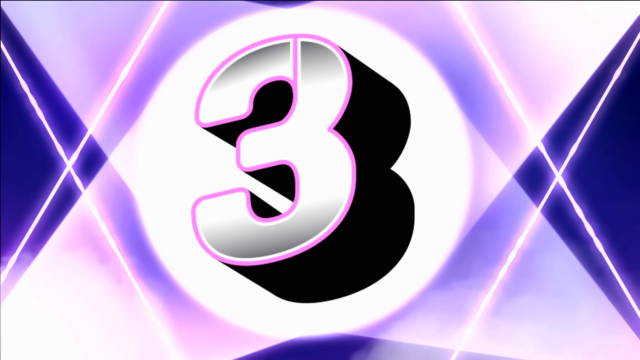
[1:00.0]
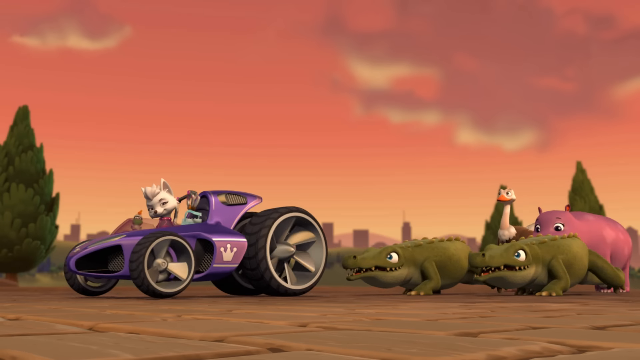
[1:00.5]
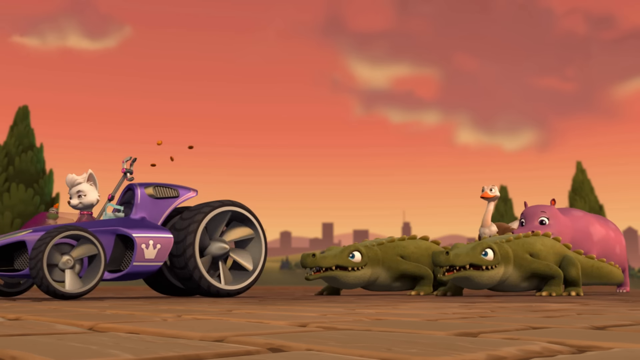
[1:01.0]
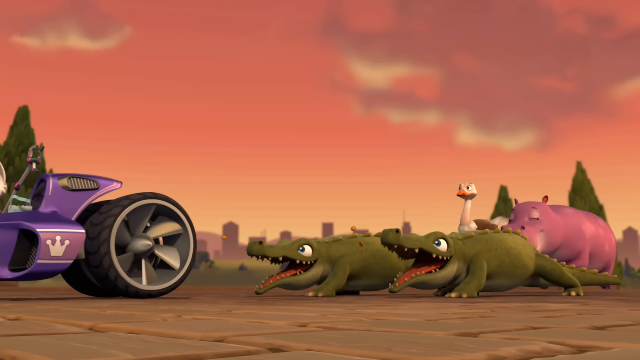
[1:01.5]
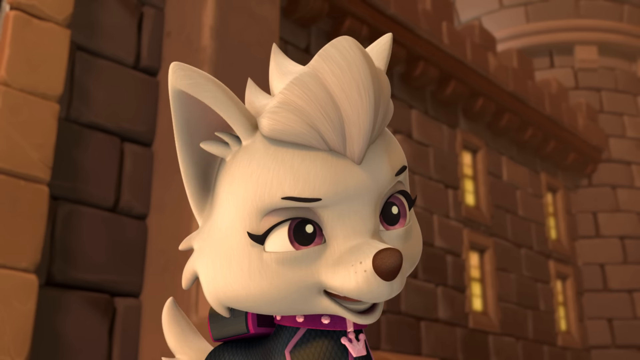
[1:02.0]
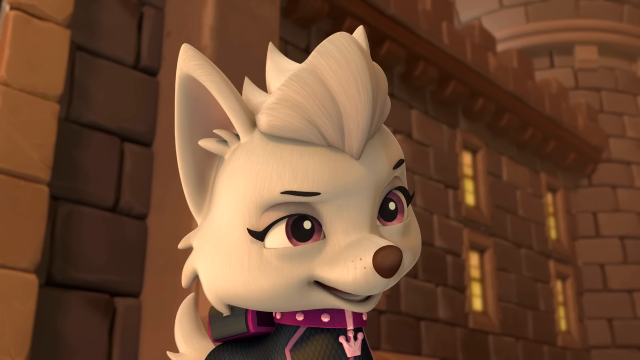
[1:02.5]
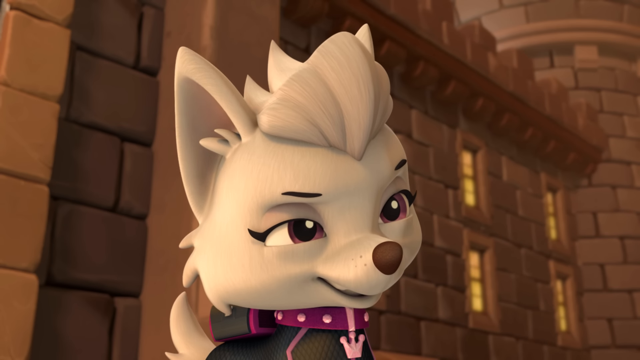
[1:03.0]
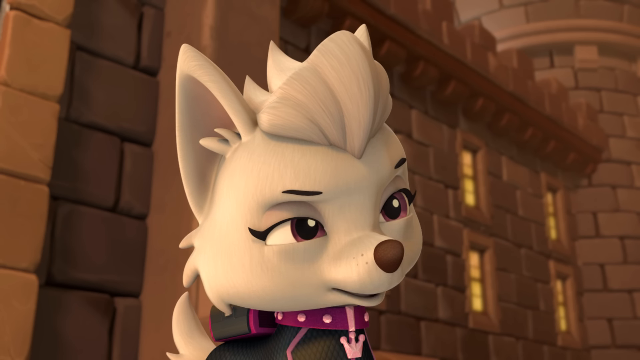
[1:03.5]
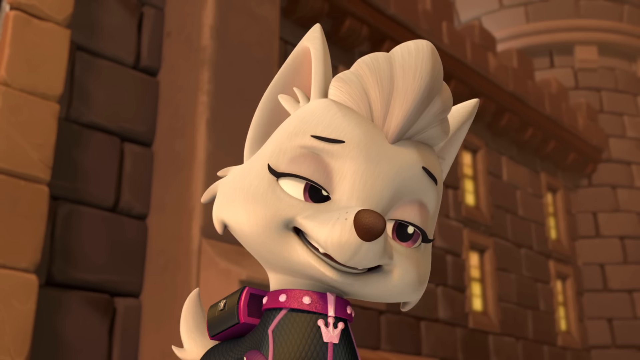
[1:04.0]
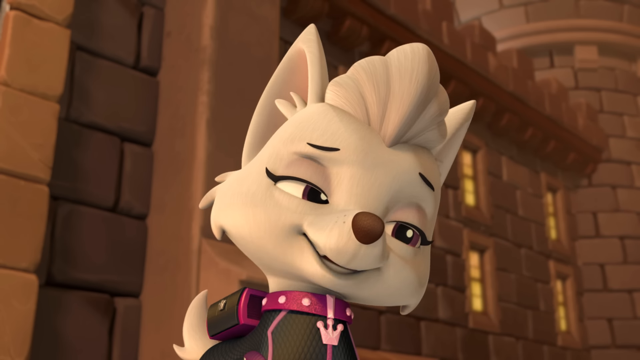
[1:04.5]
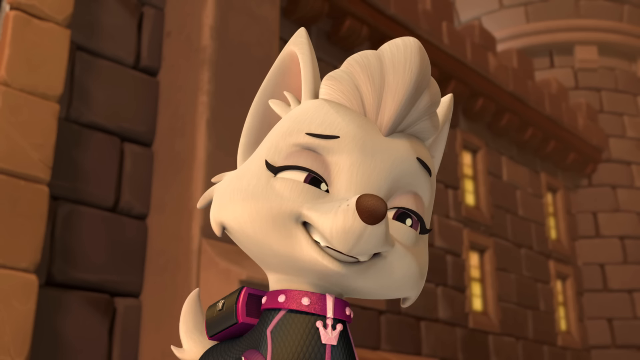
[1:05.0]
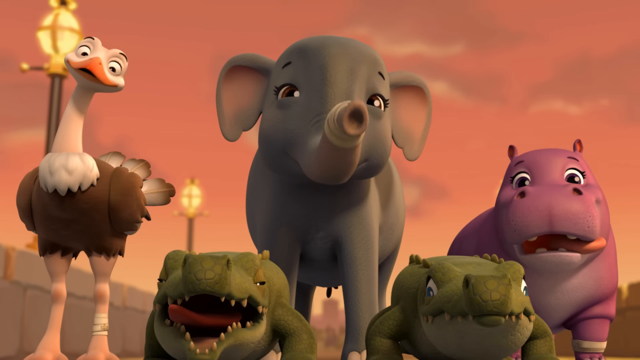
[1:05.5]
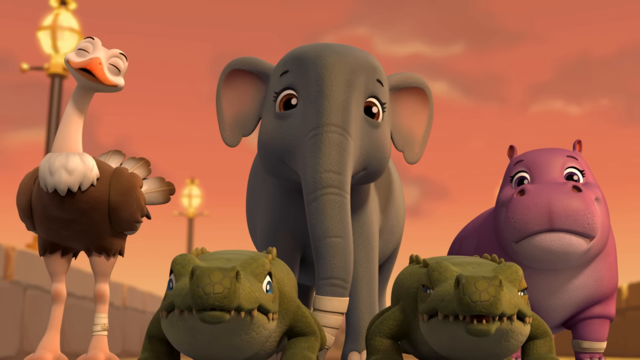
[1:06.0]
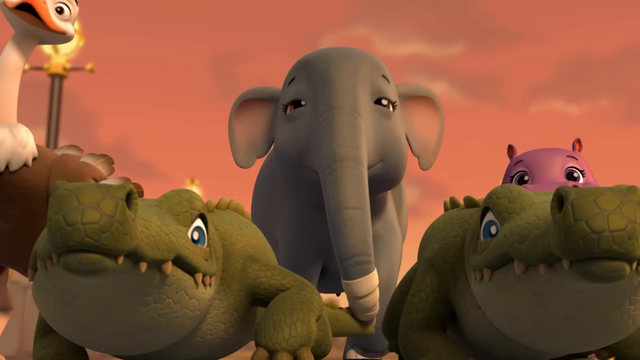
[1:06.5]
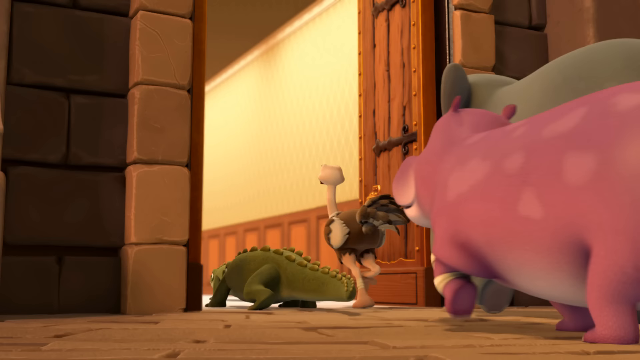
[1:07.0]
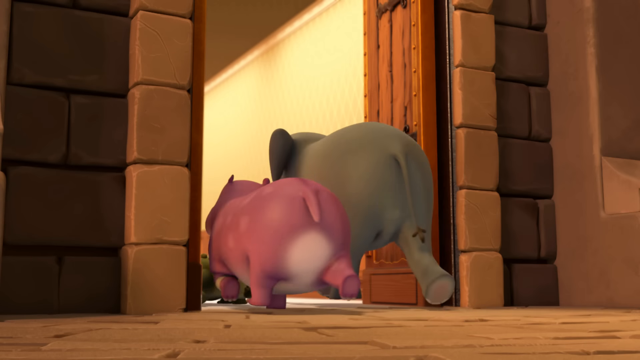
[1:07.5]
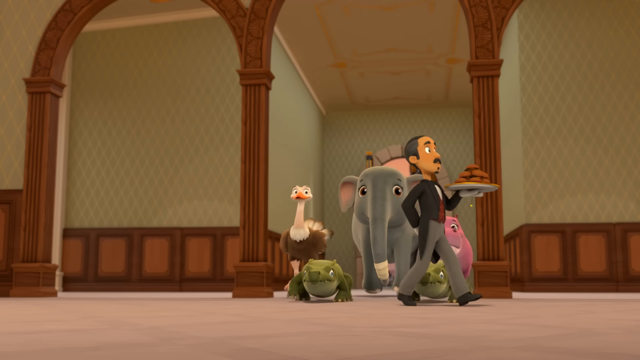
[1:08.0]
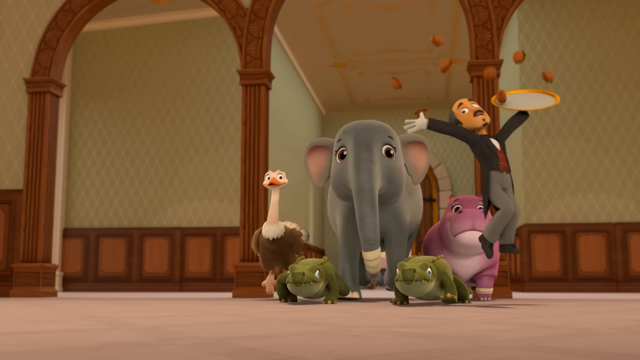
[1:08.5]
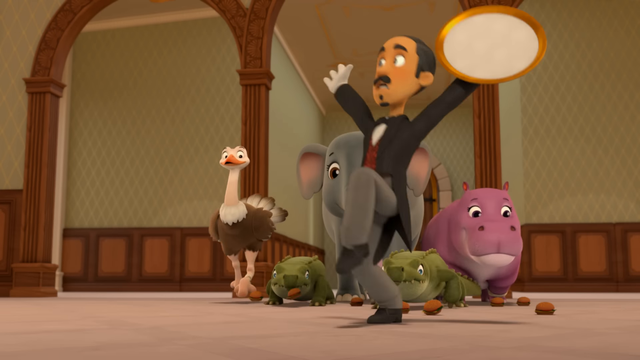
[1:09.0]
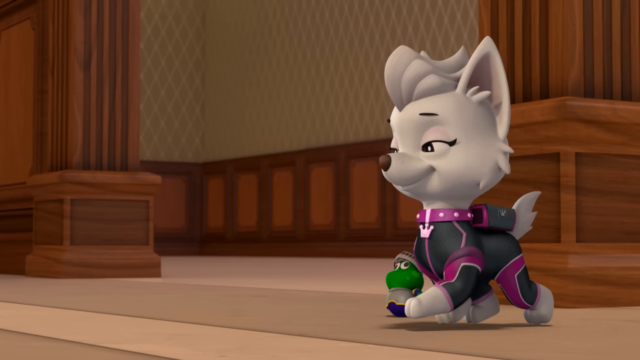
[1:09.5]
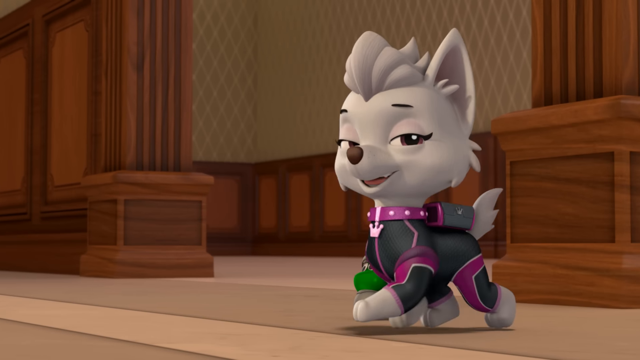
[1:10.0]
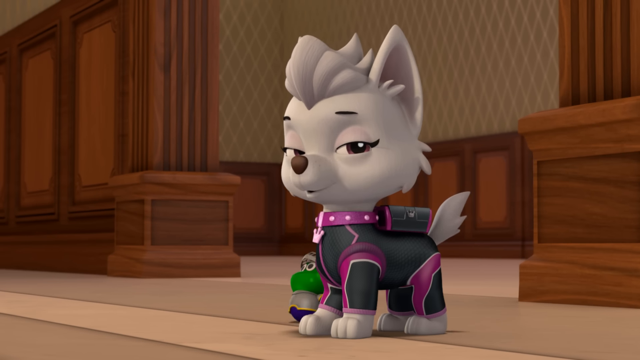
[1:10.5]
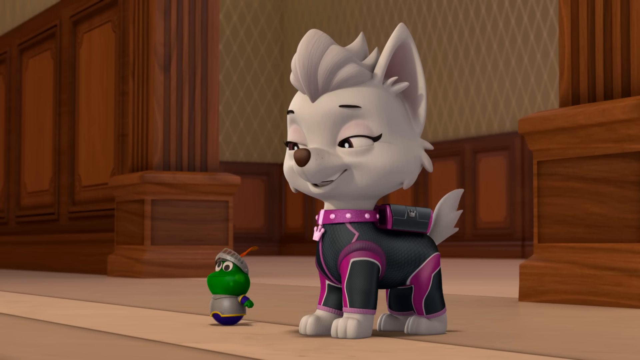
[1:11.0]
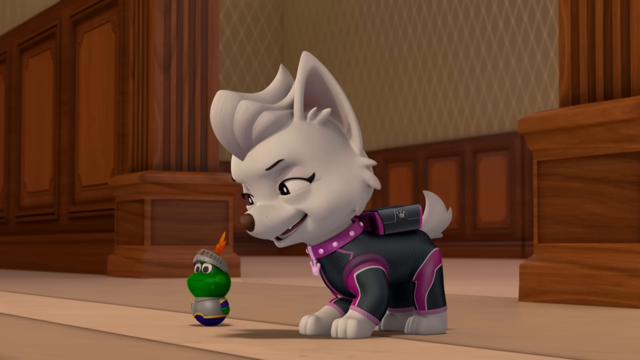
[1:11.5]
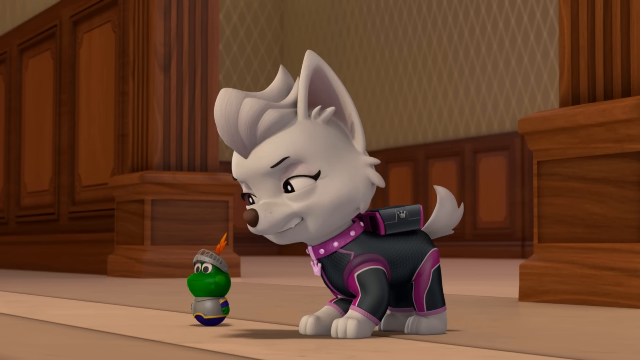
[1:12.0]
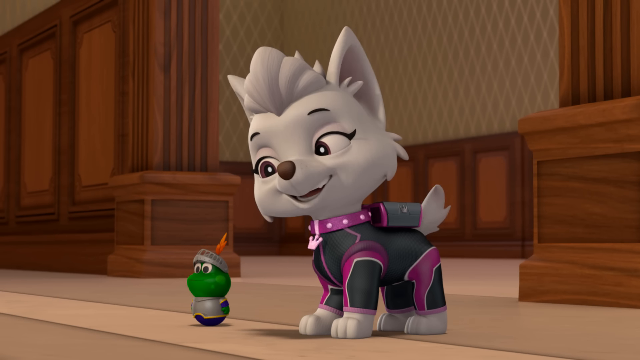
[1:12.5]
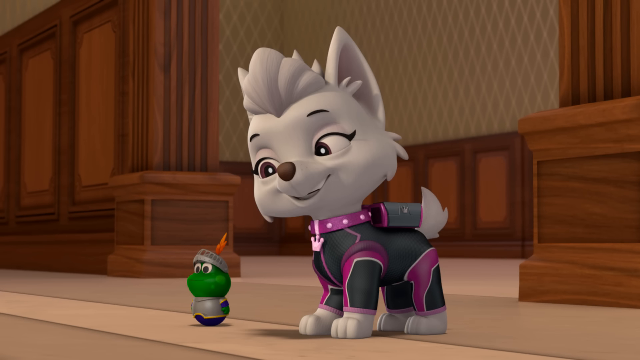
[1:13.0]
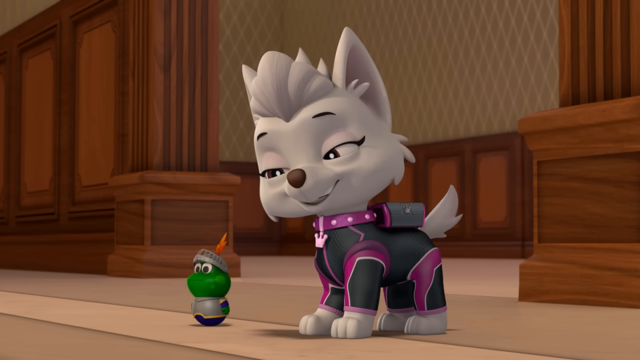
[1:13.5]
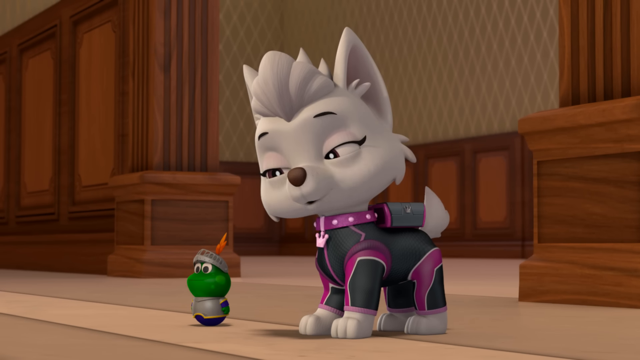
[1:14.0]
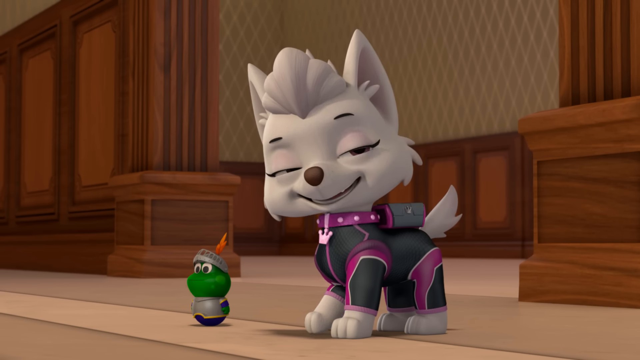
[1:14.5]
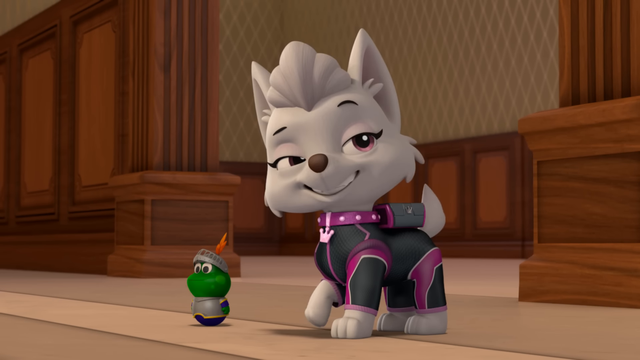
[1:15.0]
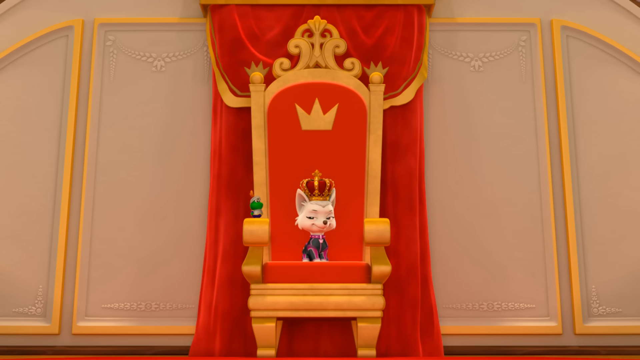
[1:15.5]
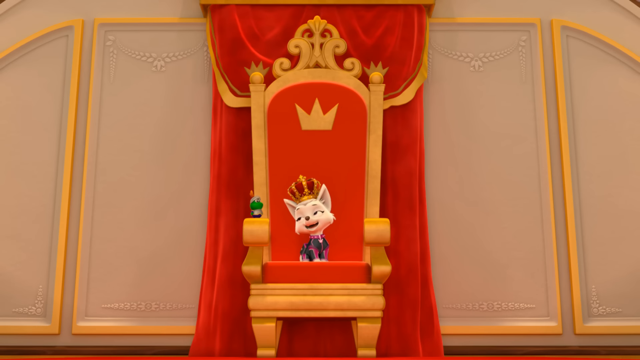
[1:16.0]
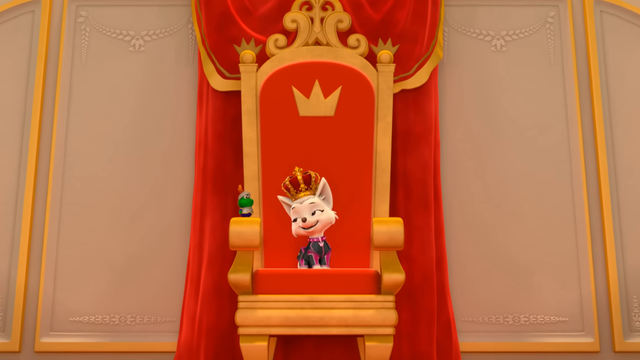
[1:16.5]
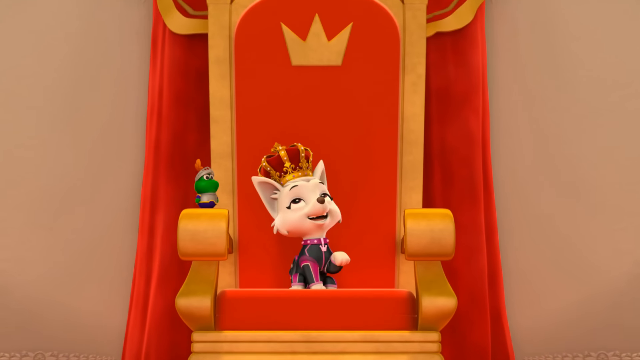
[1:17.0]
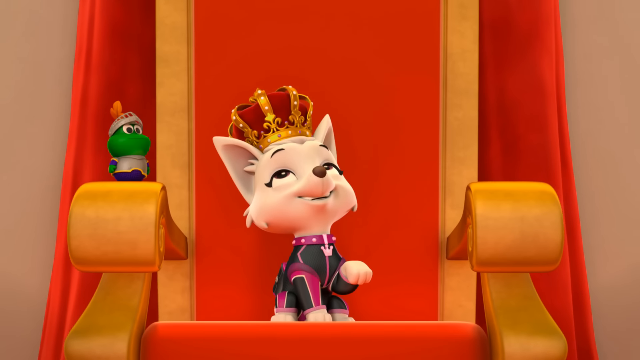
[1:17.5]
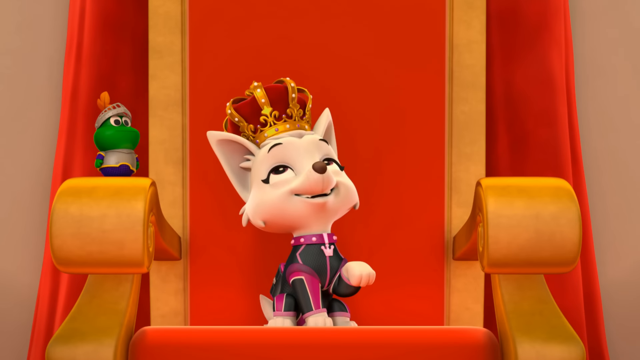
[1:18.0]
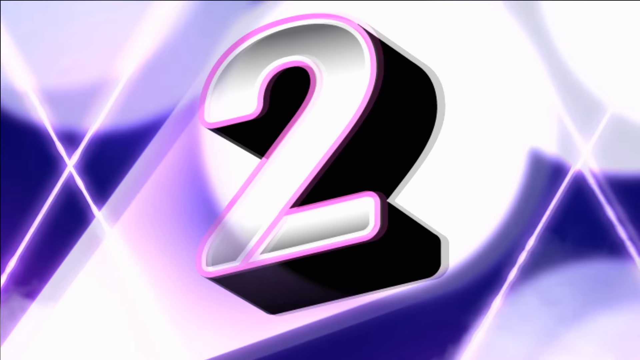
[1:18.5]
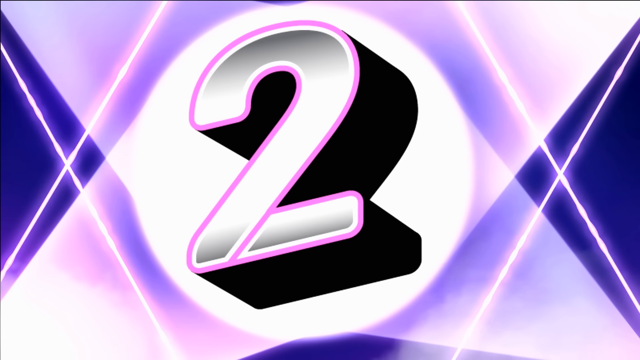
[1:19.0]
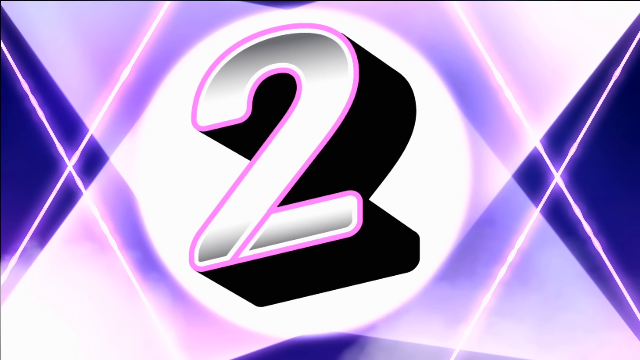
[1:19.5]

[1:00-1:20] The number three, with a purple border, is shown in what looks like a spotlight, with lines going around either side of it. The white dog then drives a purple car with larger back wheels than front wheels, followed by two crocodiles, an ostrich and what looks like a hippopotamus. The white dog then stands in front of a cartoon castle, speaking to two crocodiles, an emu, a hippo and an elephant. The animals enter the palace and surprise a butler, who drops the tray he is carrying. The white dog wags her tail and speaks to her small green friend. The view looks up to show the white dog sitting on a throne, with the small green creature sitting on the arm of the throne next to her. A cut leads to a large number two in the spotlight with searchlights around it, and then to what looks like an igloo-style castle.